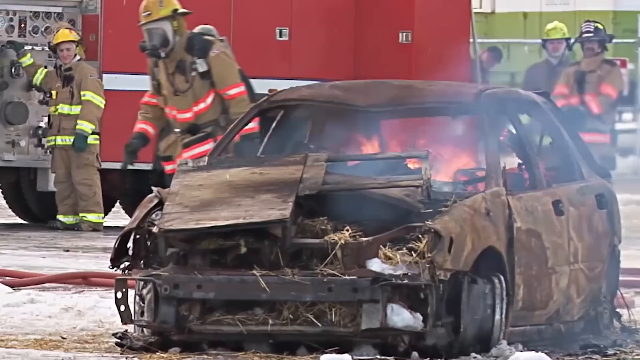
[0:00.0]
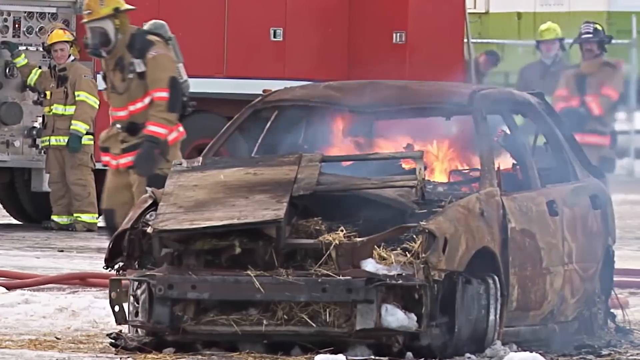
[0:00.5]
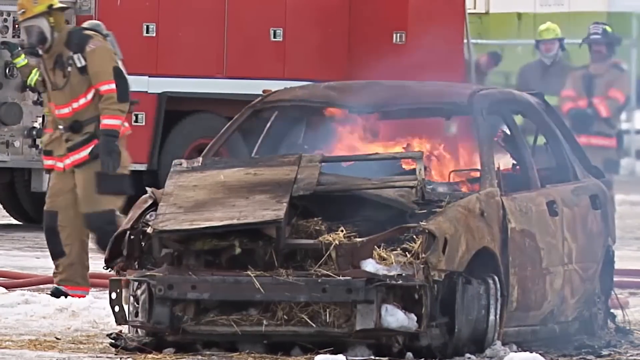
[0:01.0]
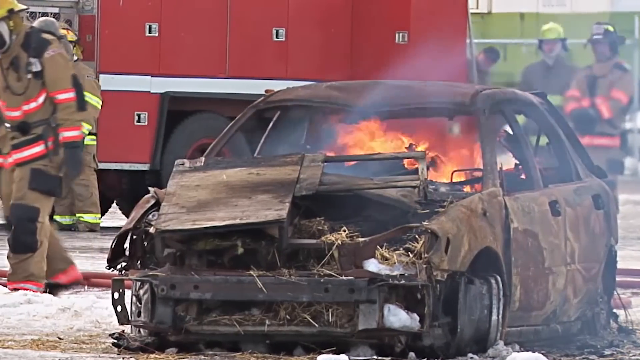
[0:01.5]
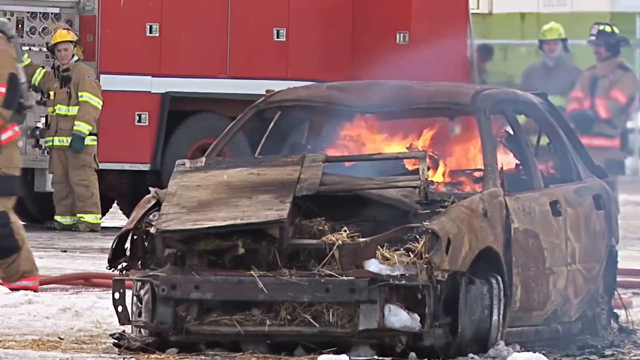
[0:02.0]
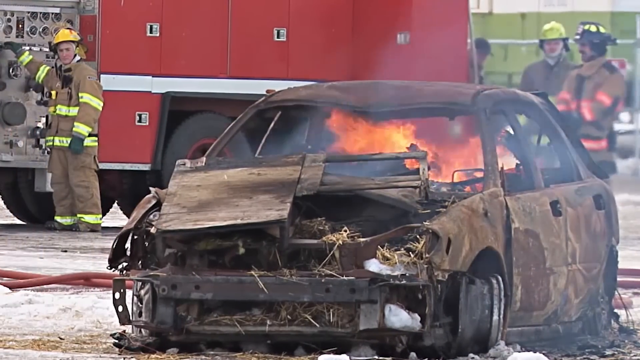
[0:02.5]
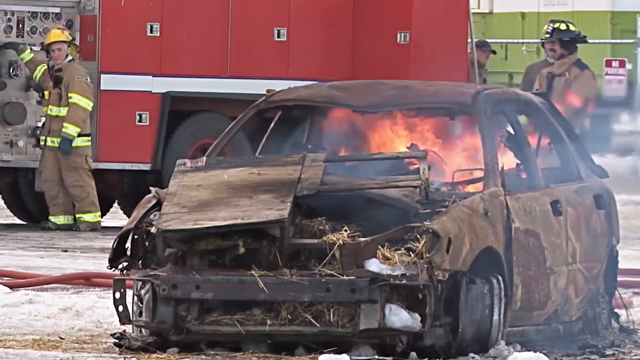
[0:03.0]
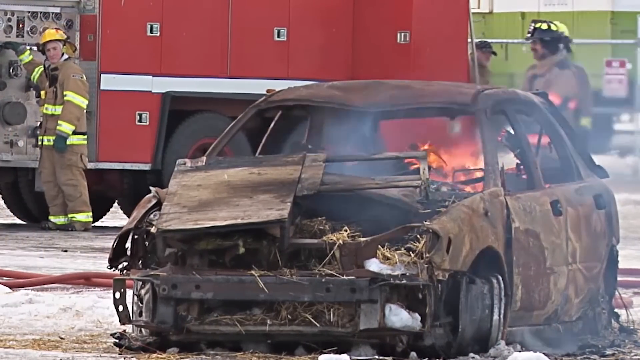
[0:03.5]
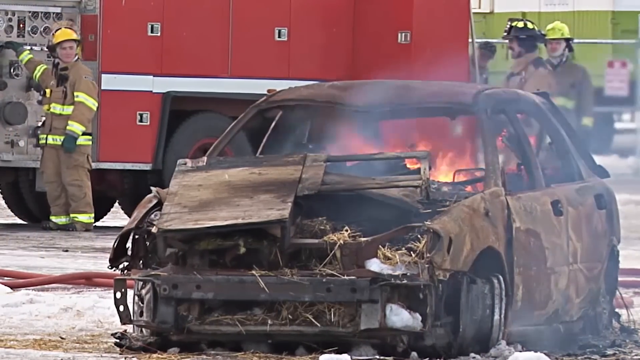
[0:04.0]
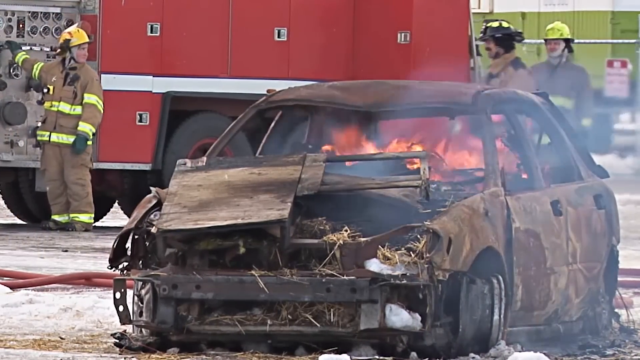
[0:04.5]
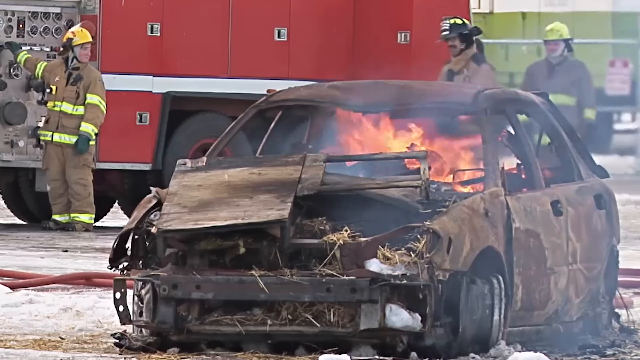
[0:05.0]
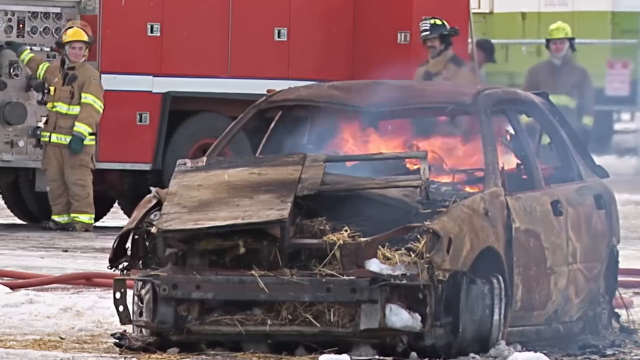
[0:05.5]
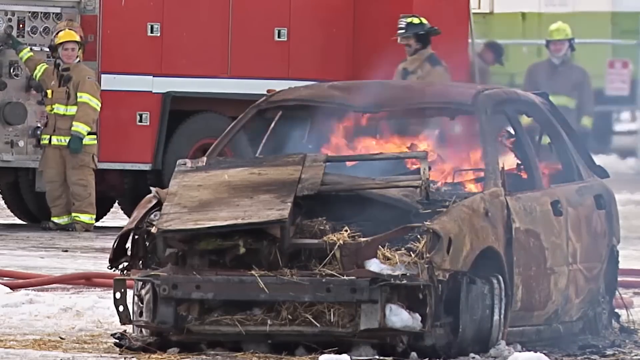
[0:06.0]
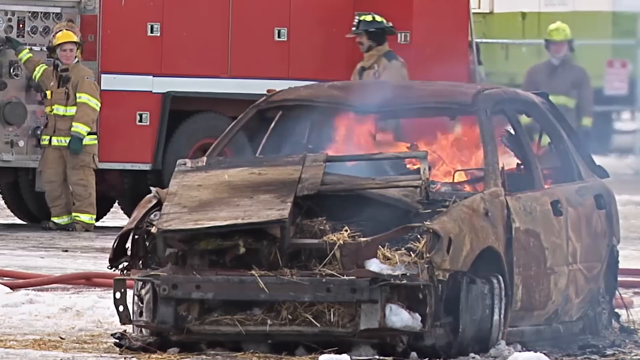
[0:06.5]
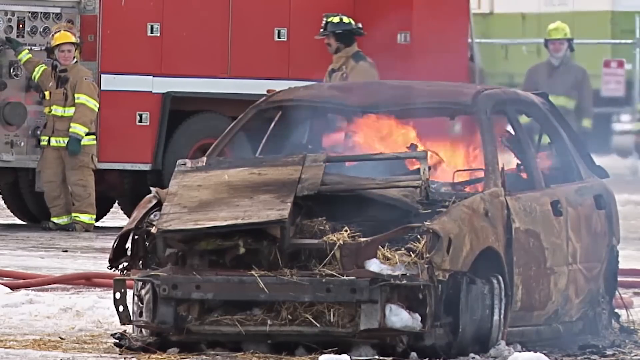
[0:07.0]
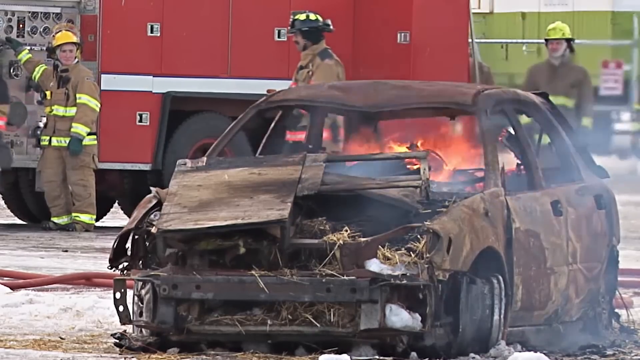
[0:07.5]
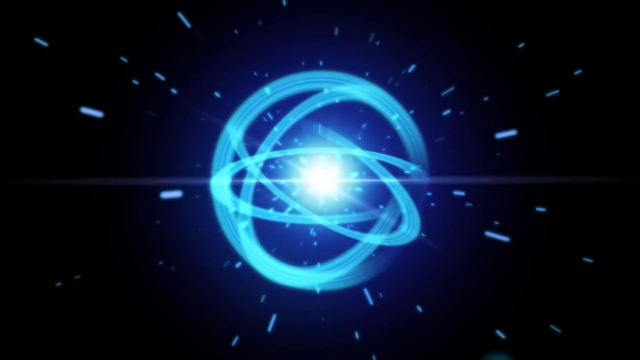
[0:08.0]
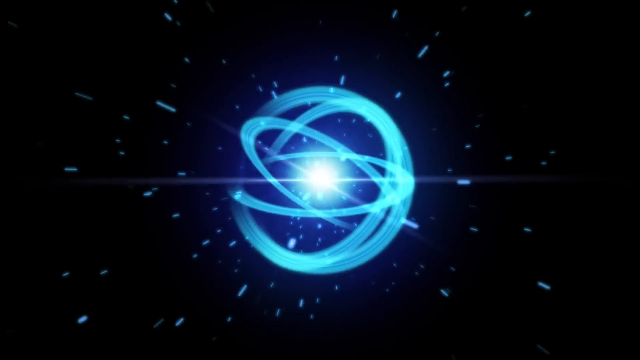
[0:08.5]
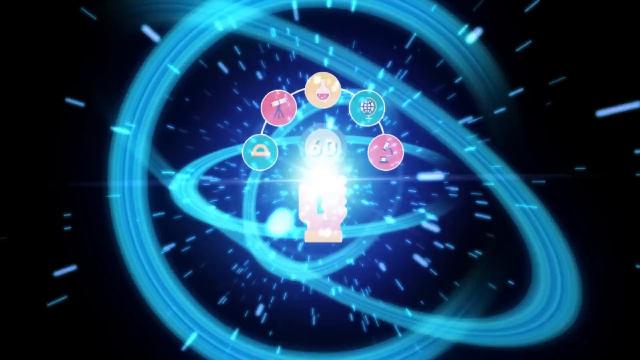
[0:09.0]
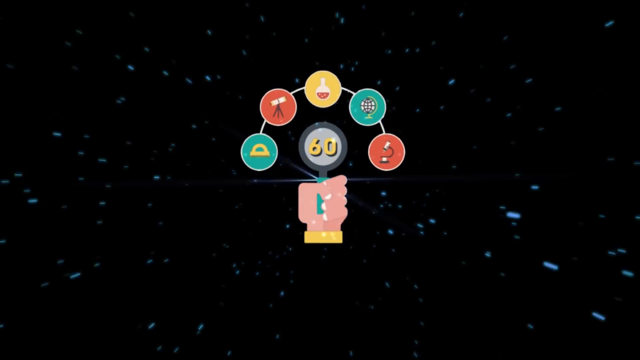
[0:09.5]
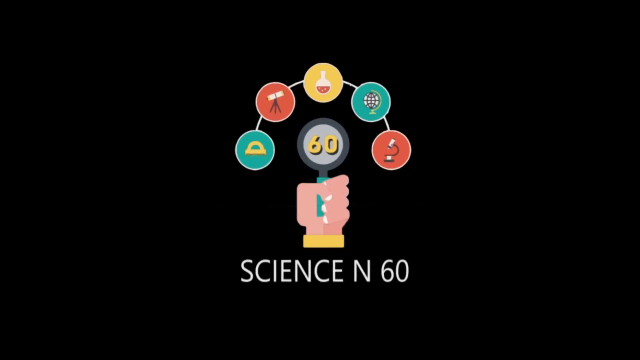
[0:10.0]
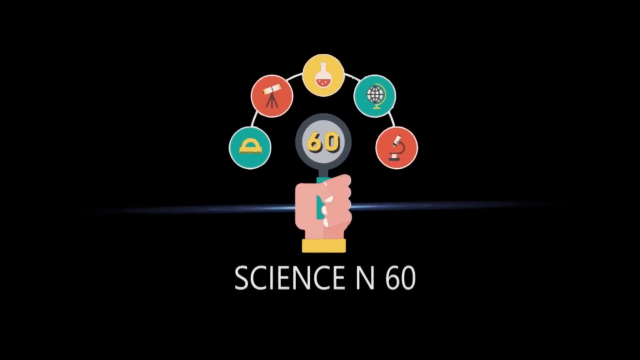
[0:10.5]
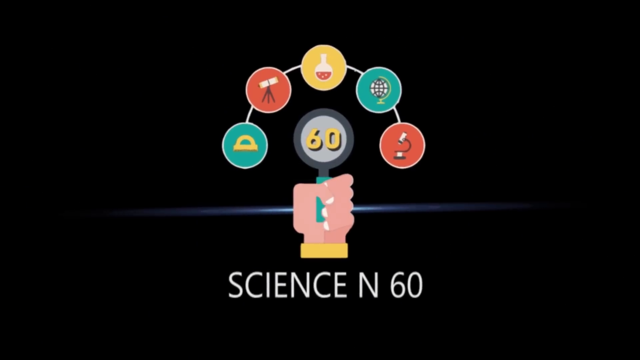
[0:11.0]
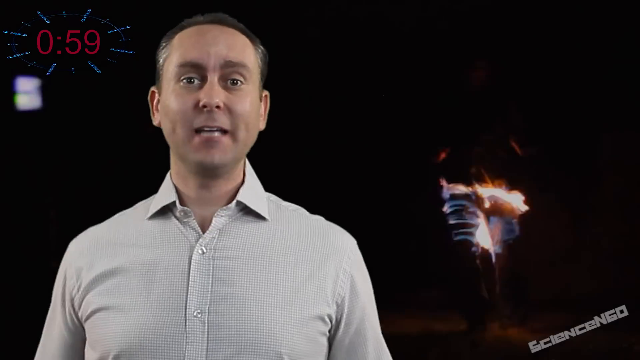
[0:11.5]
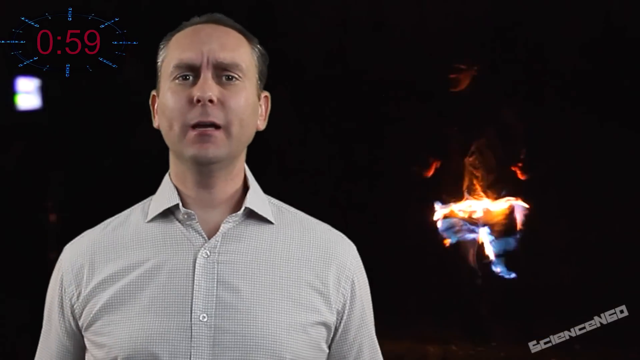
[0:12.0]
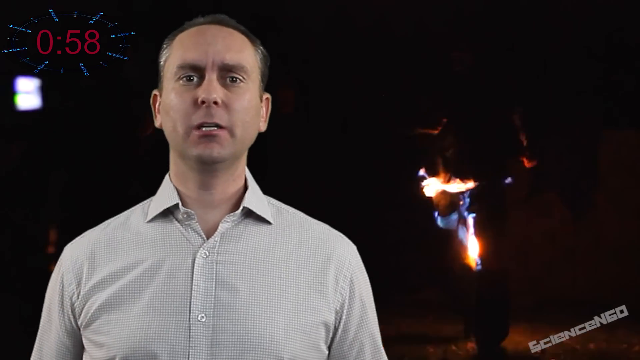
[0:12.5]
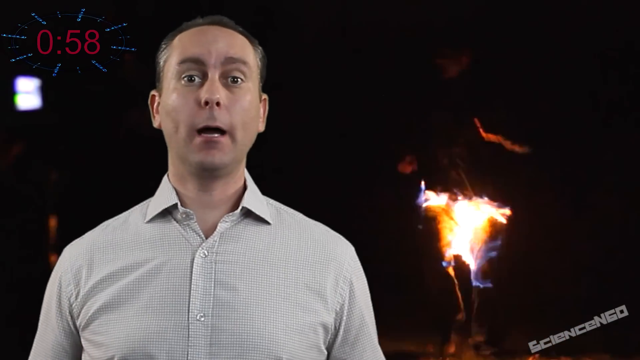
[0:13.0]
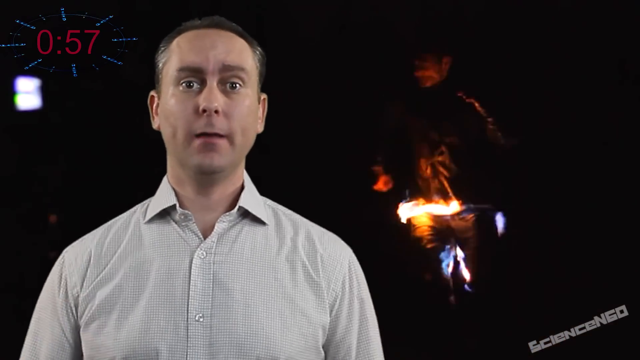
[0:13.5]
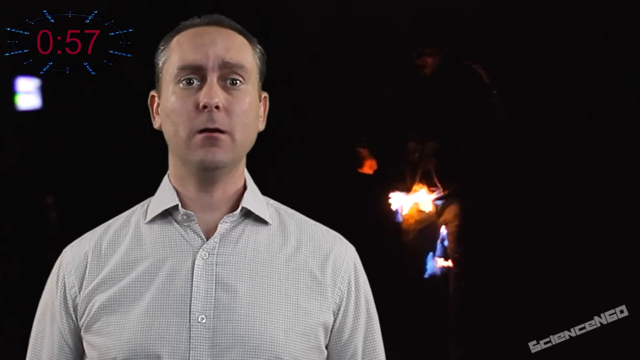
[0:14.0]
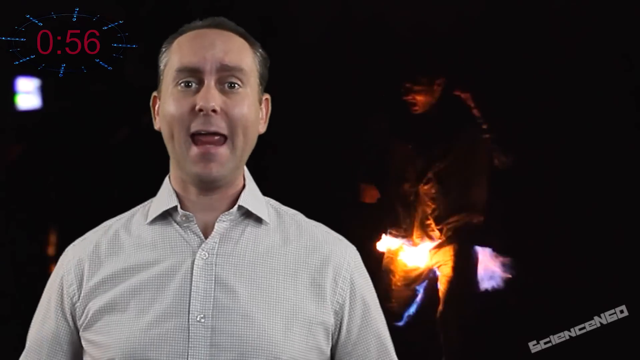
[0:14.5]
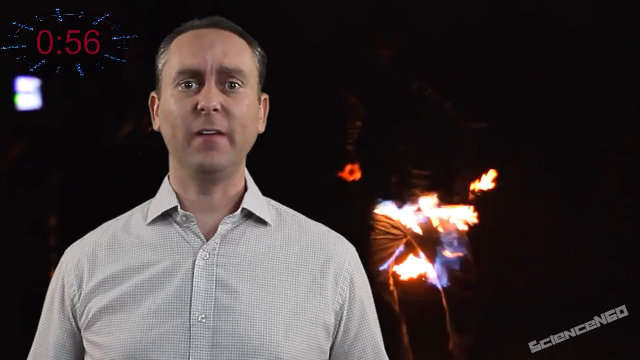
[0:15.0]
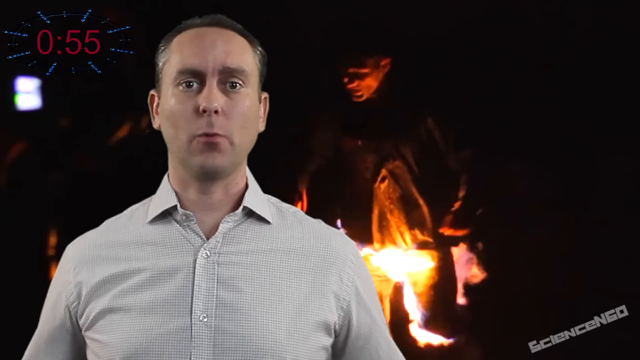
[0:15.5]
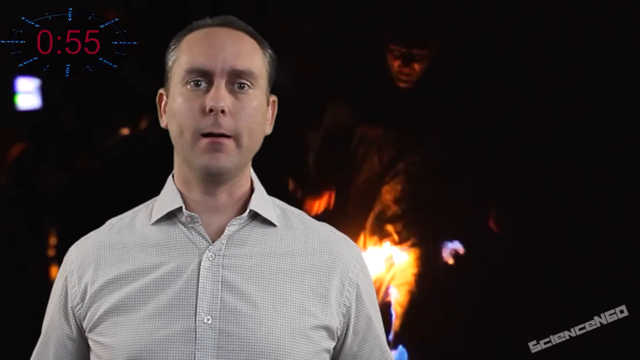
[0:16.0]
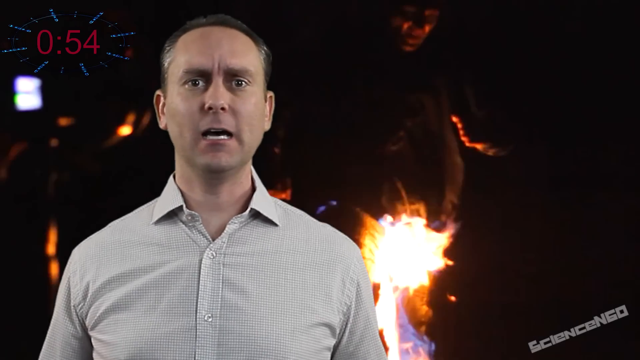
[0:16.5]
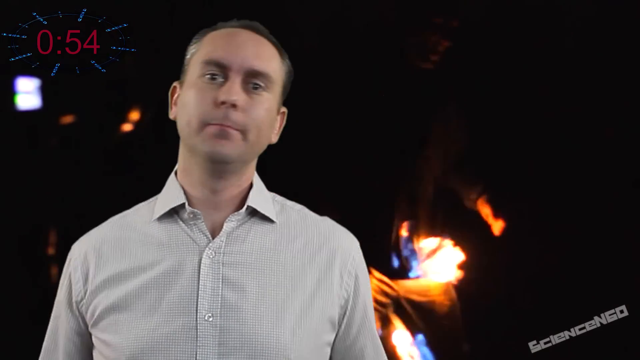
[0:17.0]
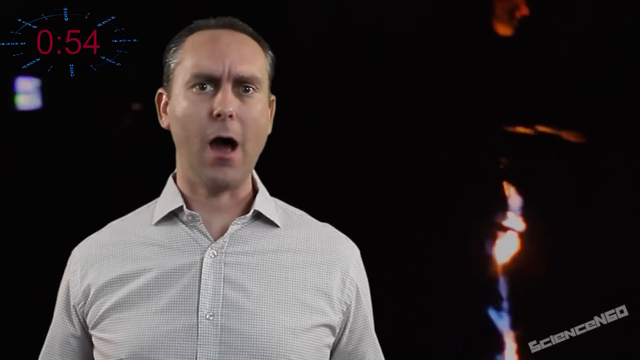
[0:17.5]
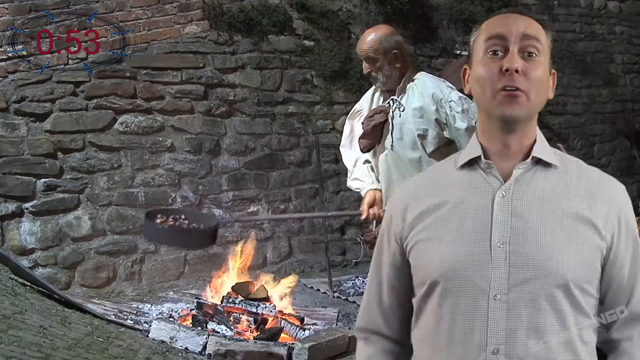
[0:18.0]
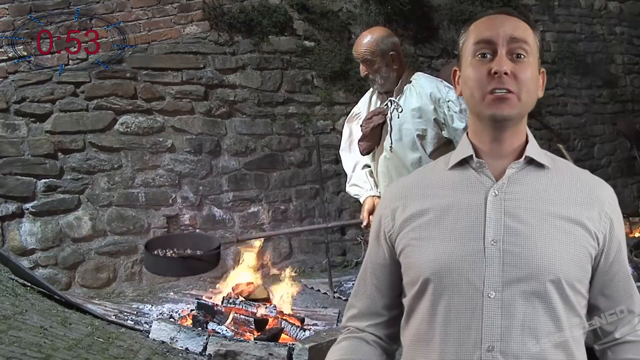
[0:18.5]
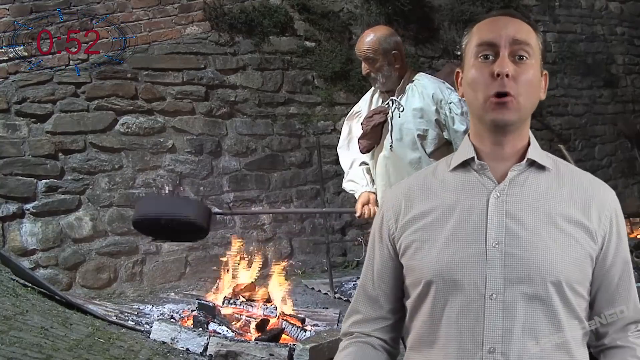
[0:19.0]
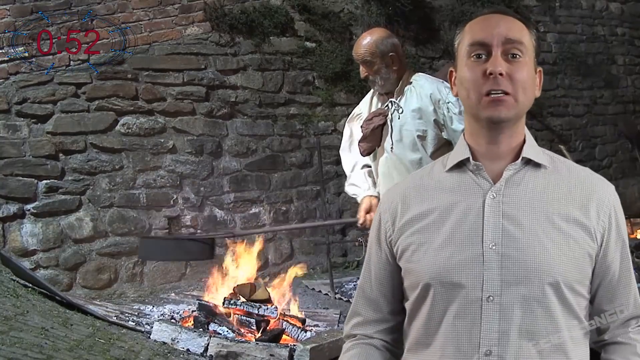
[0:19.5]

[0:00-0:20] The video is titled Spontaneous Combustion, and on-screen text reads "Spontaneous Human Combustion." It shows images of a car burning, with a fire truck there and firefighters. At the start a man is talking, and the video appears to be some type of science-based video, consisting mainly of a person talking intercut with images. Other images show someone running who seems to be on fire; it is night, and only their burning body from the waist down is visible. There are also images of a man cooking something over a fire.